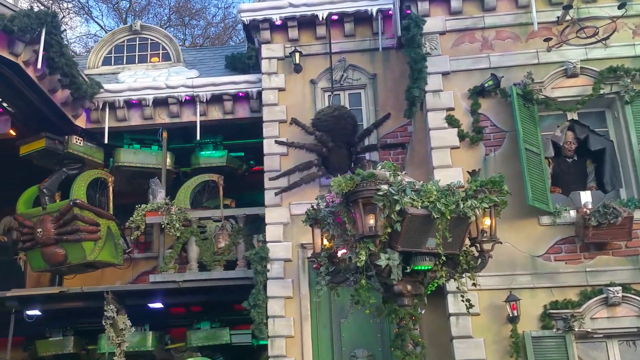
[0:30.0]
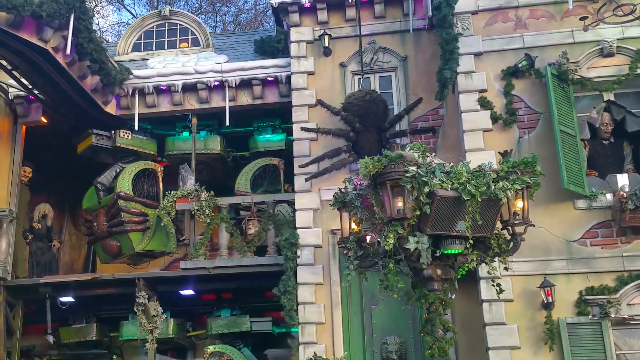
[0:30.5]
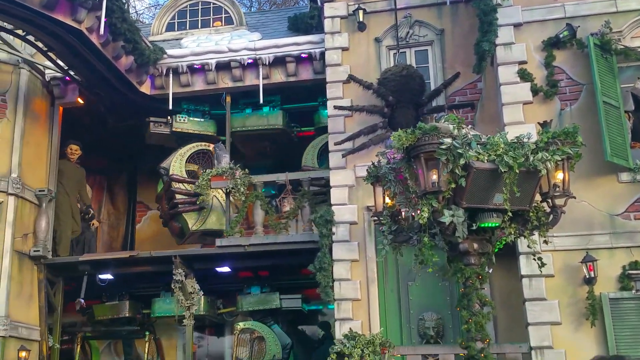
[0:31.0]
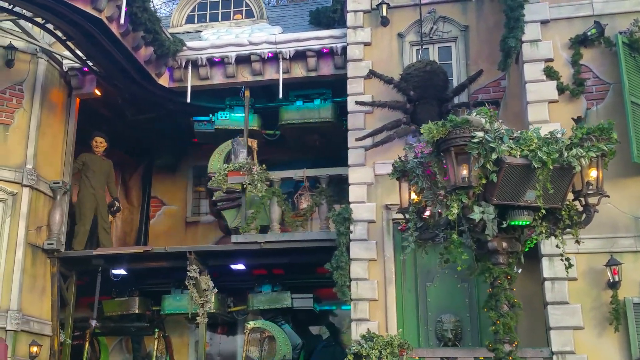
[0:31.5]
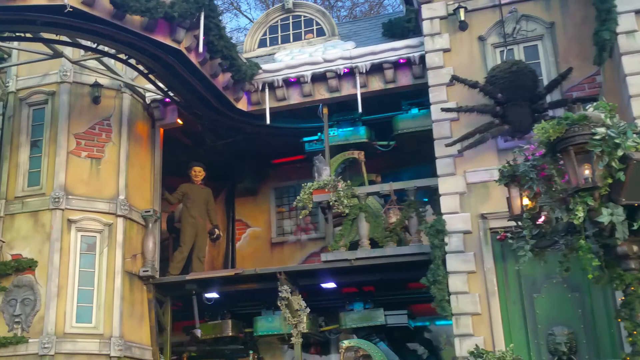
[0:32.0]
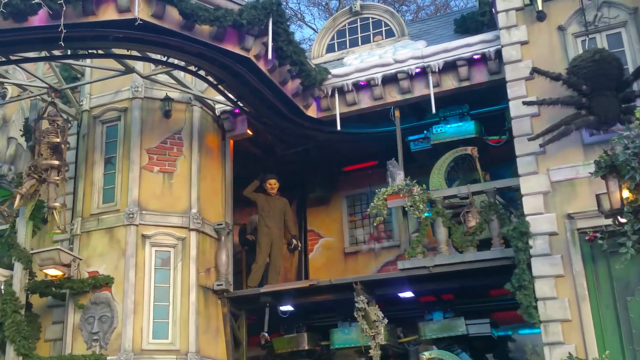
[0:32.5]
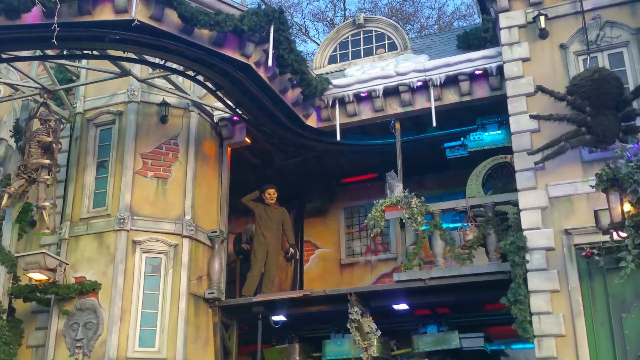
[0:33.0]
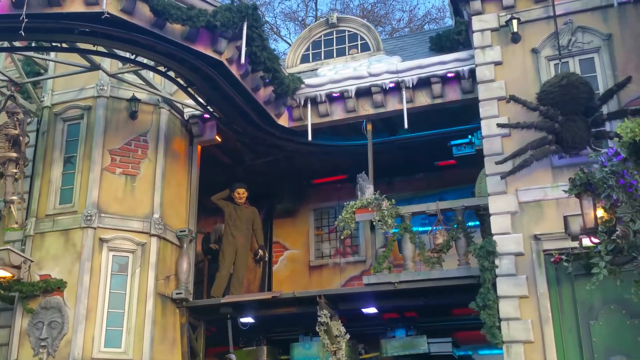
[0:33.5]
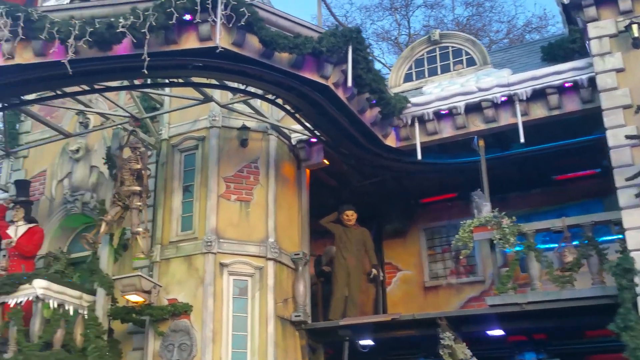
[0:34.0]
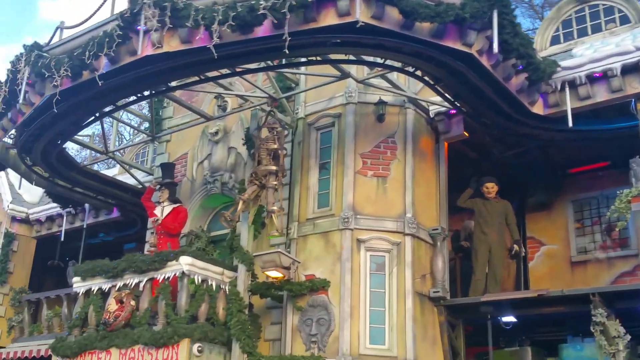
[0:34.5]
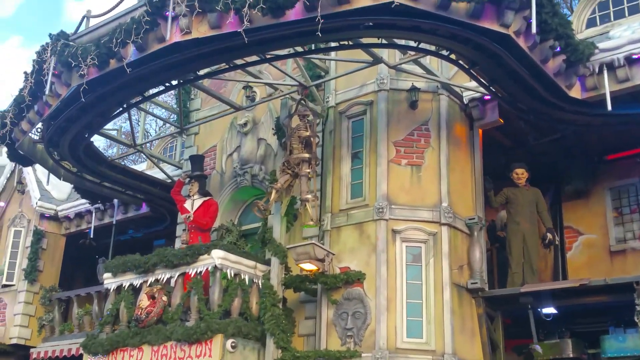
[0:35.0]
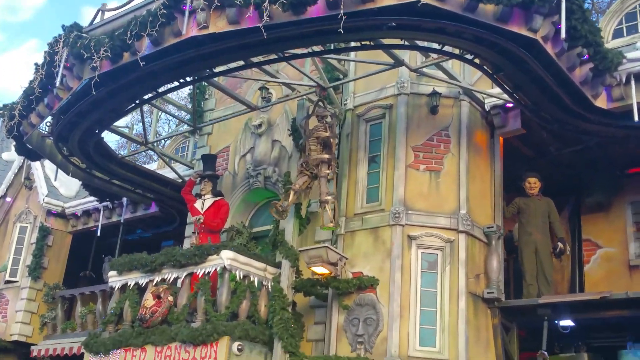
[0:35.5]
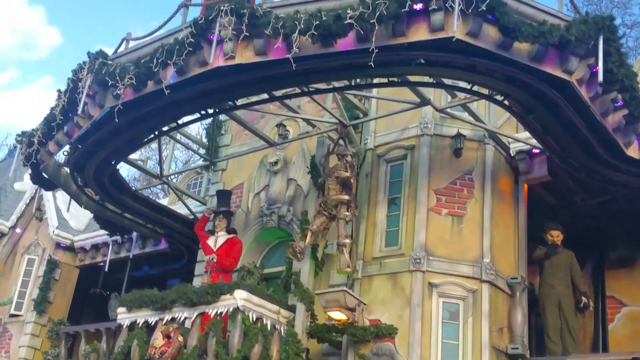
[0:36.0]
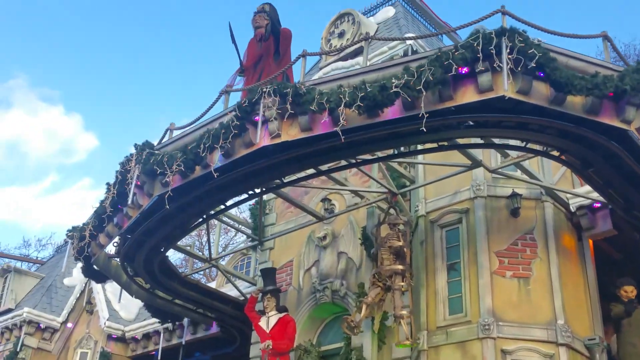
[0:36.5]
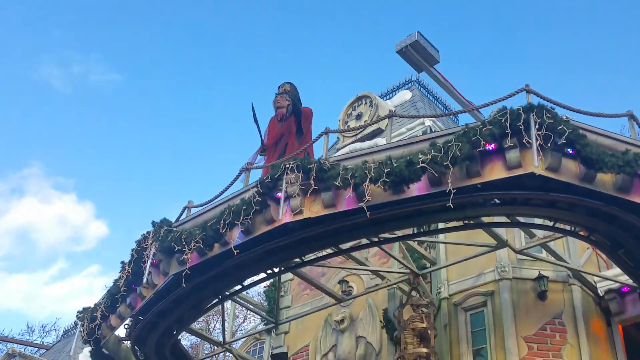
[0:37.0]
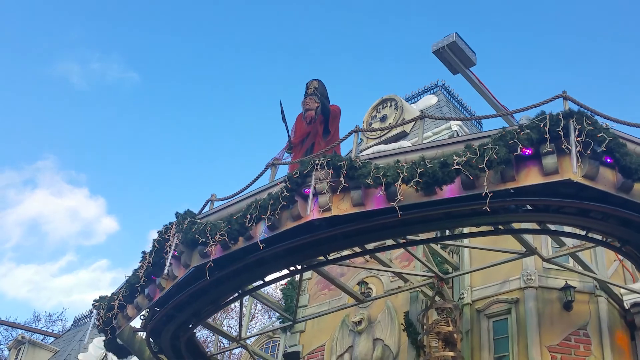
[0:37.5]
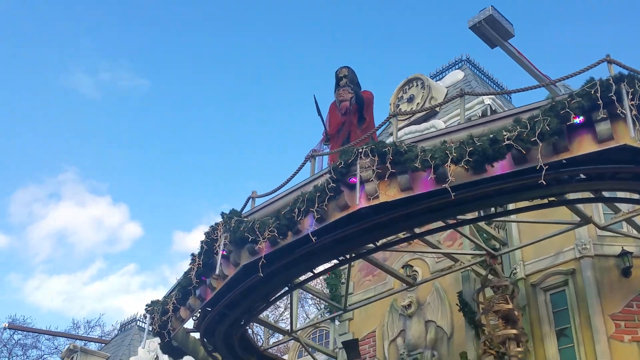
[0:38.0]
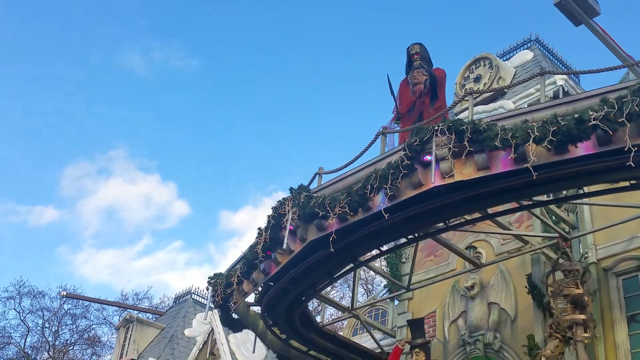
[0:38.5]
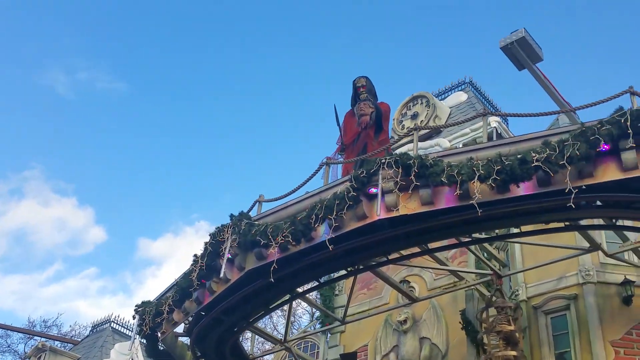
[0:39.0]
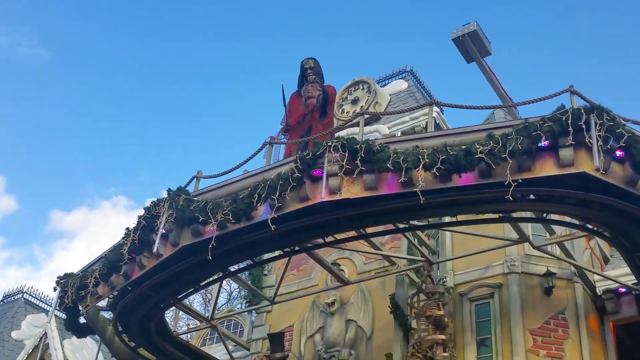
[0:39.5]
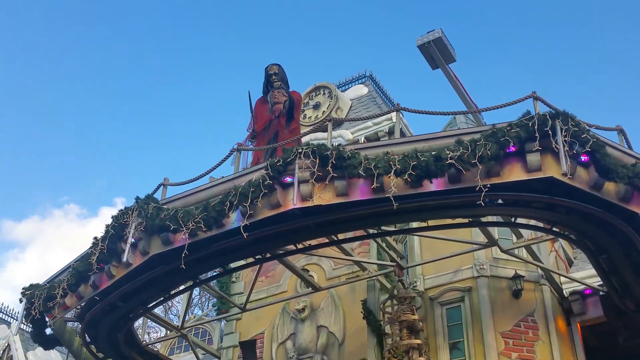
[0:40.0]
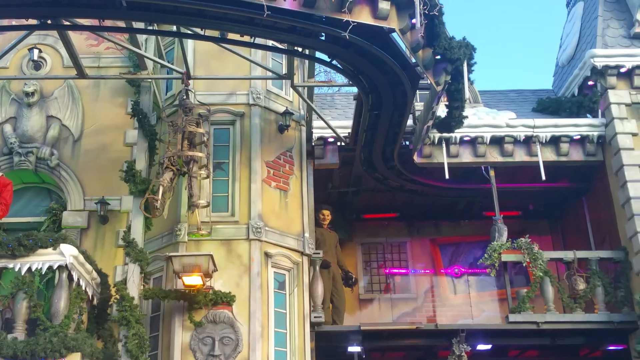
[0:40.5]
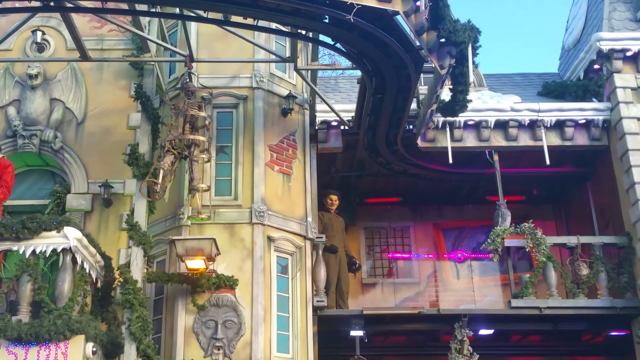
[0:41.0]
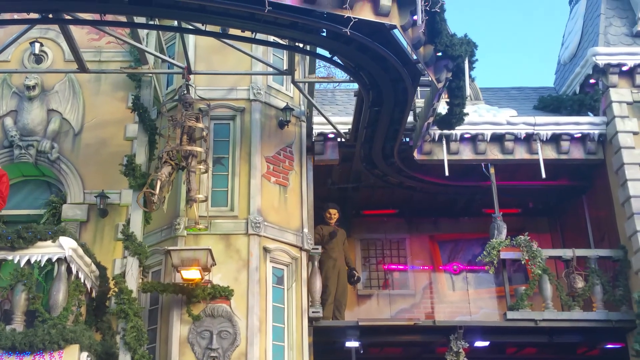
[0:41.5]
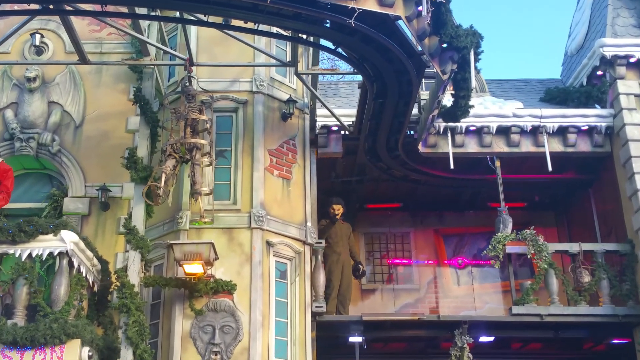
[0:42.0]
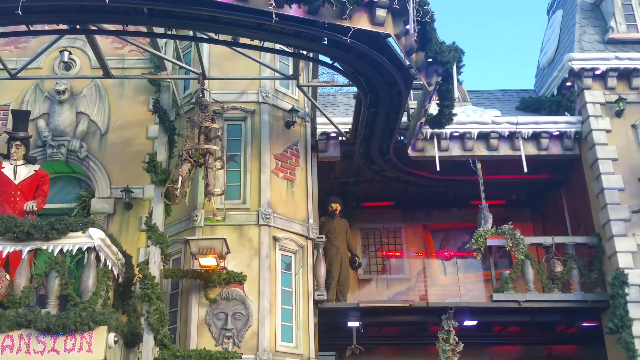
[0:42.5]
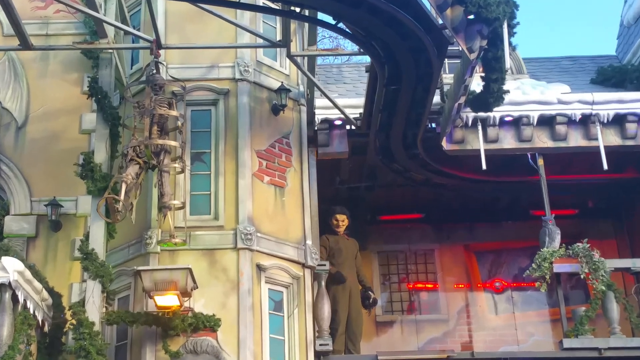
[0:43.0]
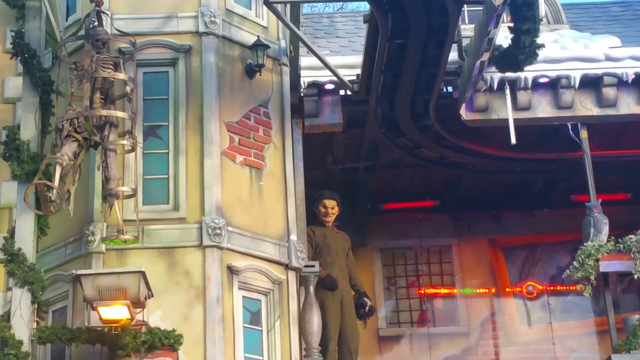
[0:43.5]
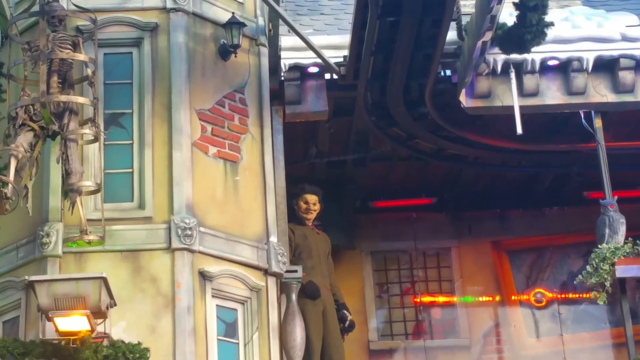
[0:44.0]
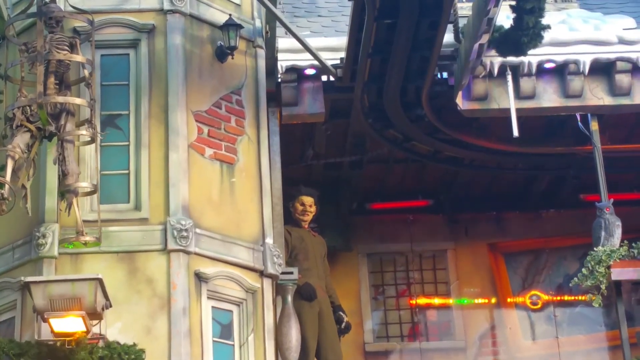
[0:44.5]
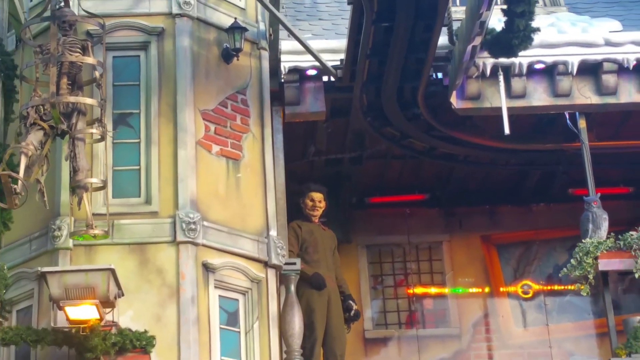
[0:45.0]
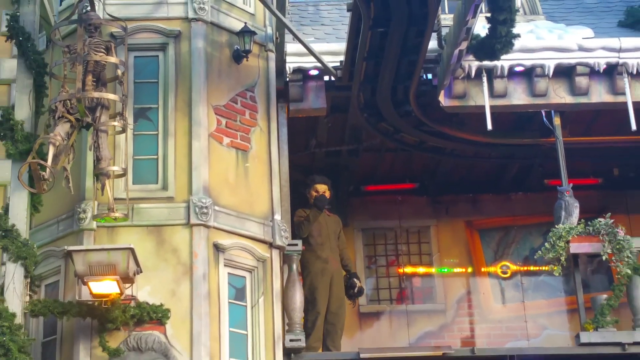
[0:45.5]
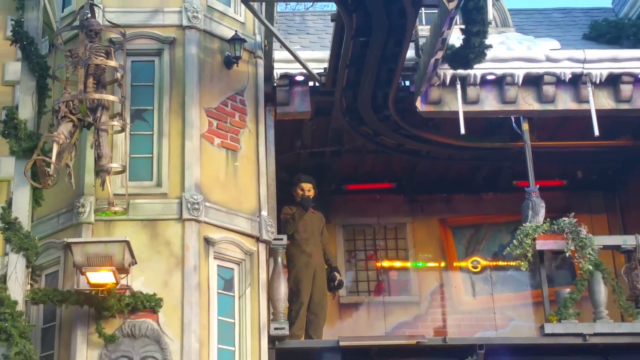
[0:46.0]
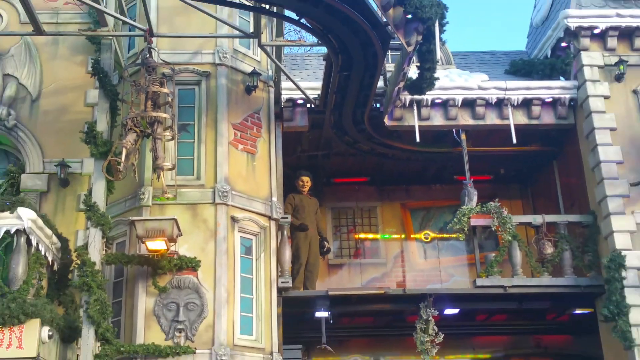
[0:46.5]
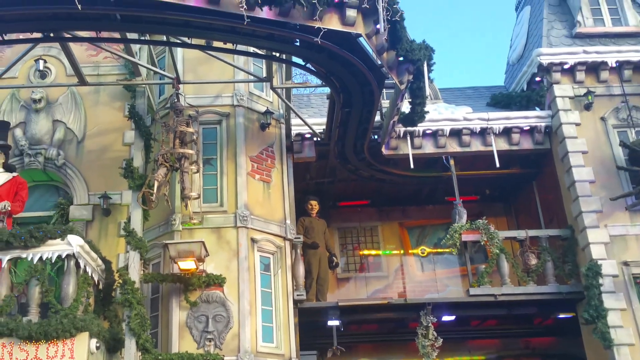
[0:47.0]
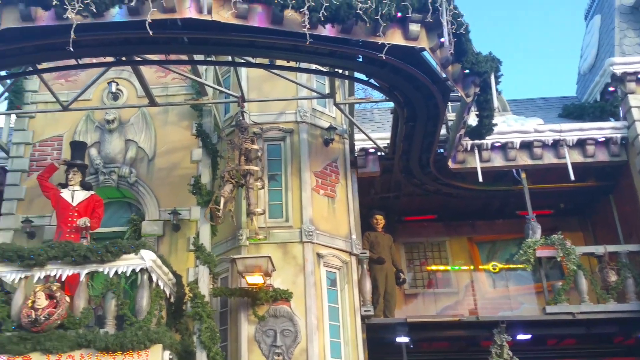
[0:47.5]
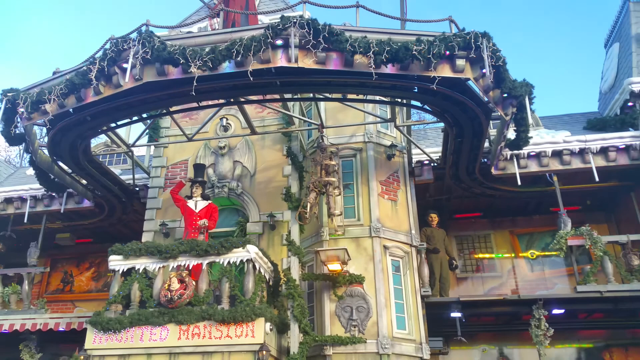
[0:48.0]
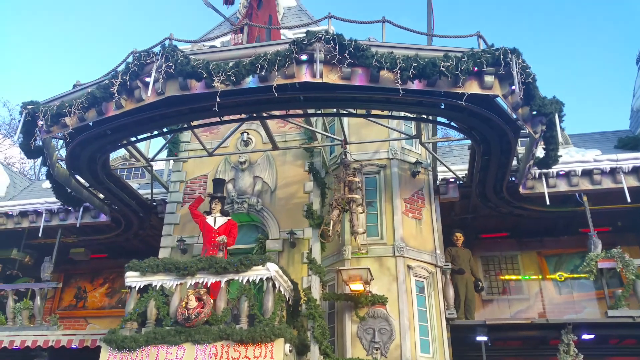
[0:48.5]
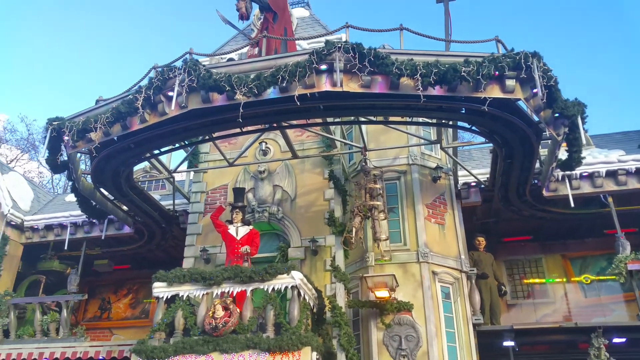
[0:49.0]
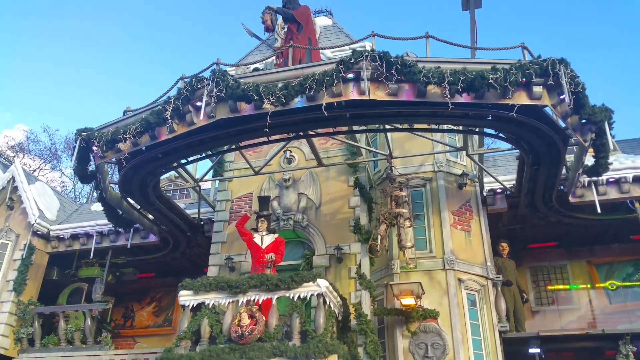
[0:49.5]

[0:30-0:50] A green trolley goes through the house. A man standing on the ledge where the trolley entered grabs the back of his head. The camera points upward to the top ledge of the balcony, where a man in a long red cloak takes his mask off, holding it down and showing the people. The camera pans back to the man near the trolley, who wears an olive green jumpsuit and holds something in his hand; he points at his own eyes and then at the camera operator's eyes. The camera zooms out from him back to the center of the home for a broader view. The man on the top balcony is still kind of waving his mask around slowly. The spider is still crawling and a few other things are moving. Another man on a lower balcony, dressed in red and white with a large, tall top hat, appears to be moving as well.